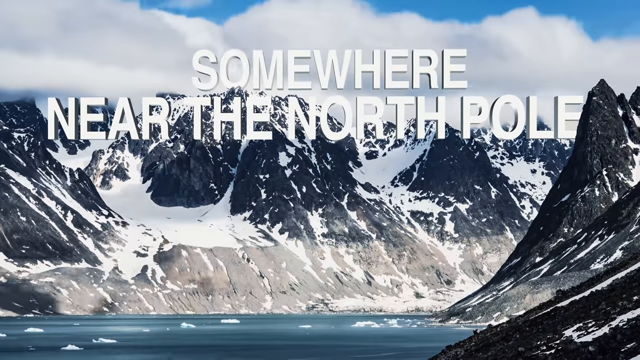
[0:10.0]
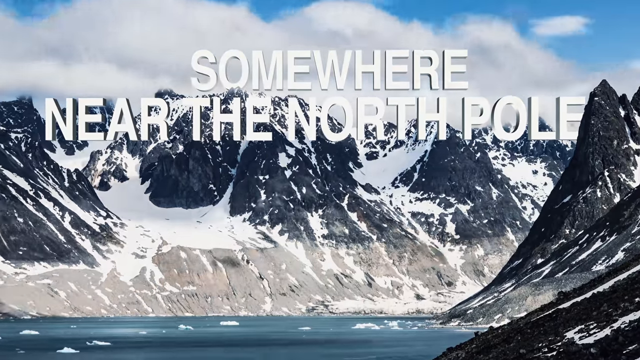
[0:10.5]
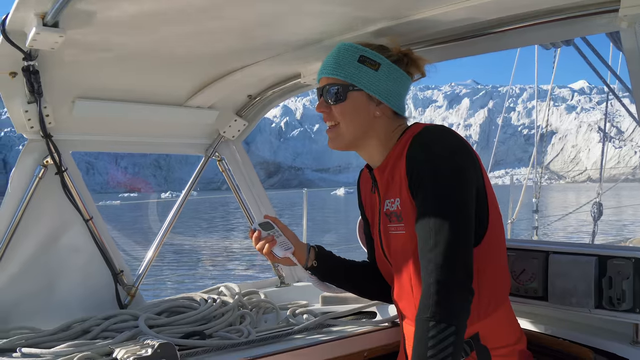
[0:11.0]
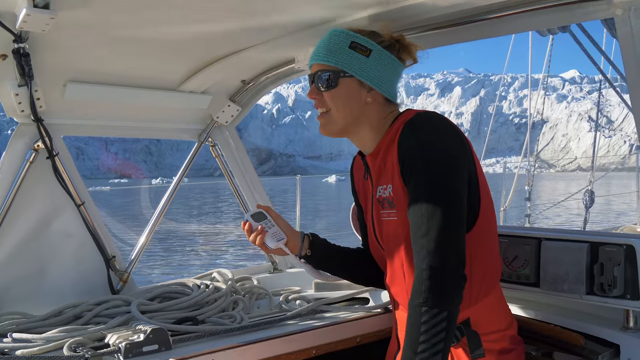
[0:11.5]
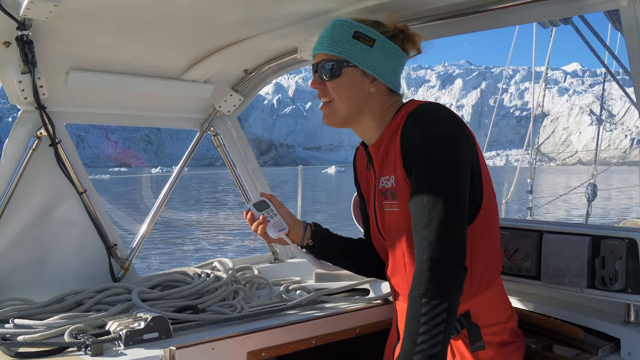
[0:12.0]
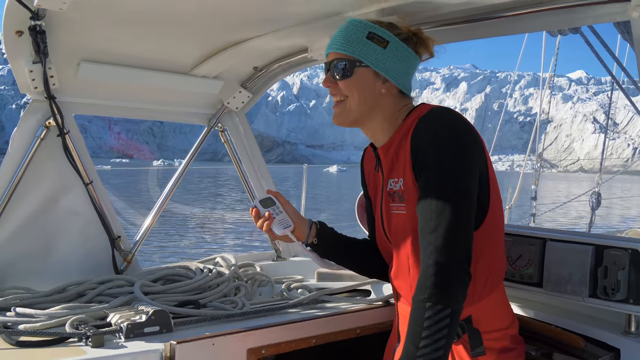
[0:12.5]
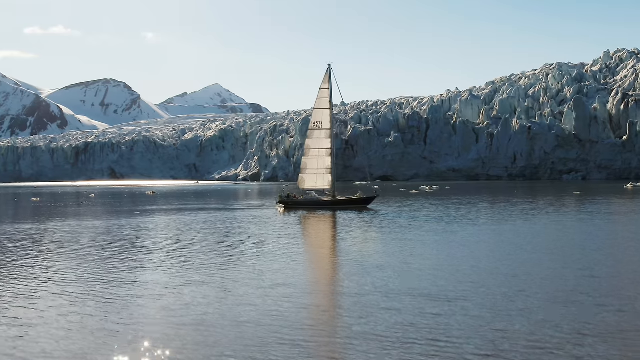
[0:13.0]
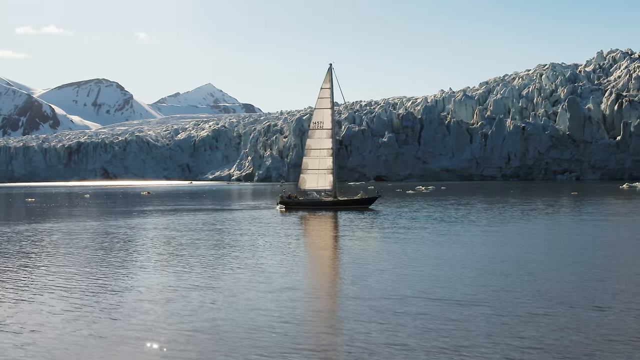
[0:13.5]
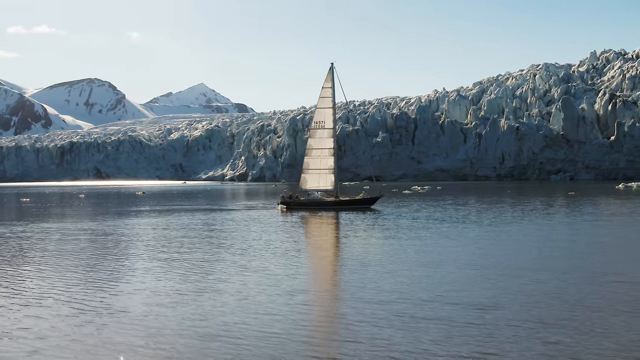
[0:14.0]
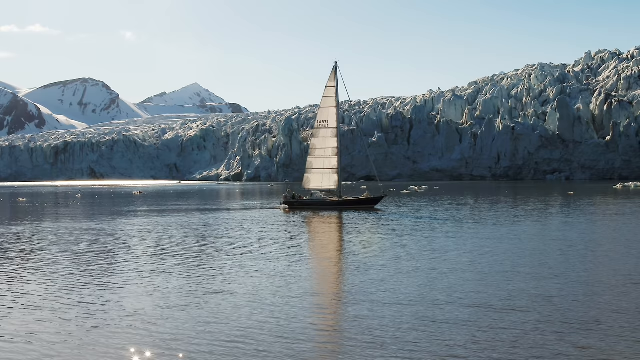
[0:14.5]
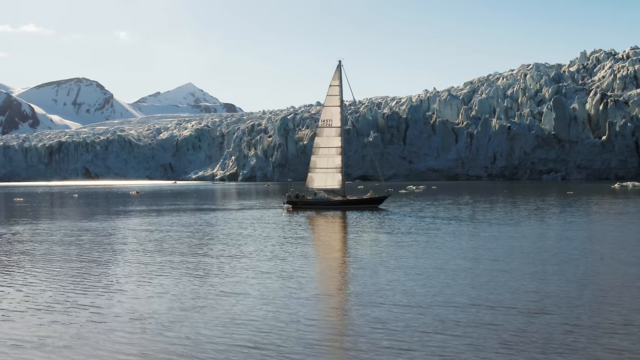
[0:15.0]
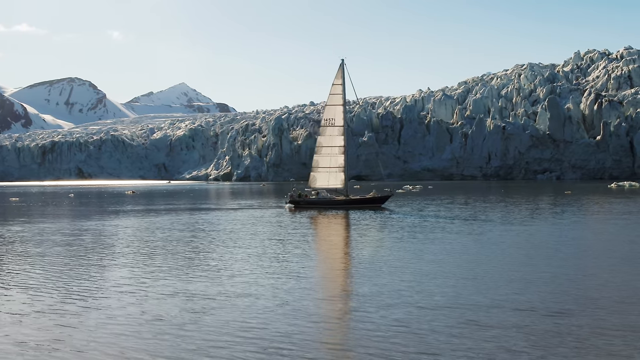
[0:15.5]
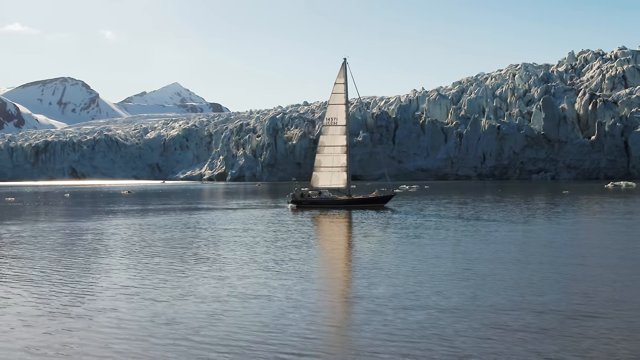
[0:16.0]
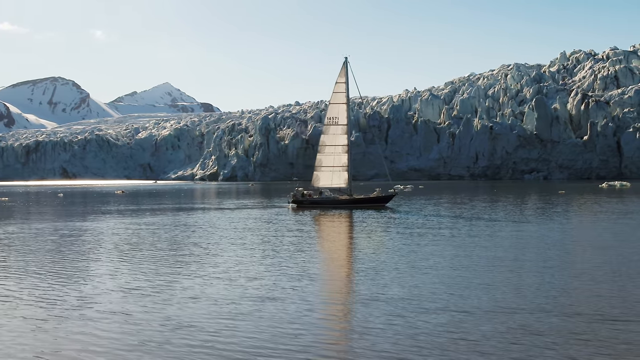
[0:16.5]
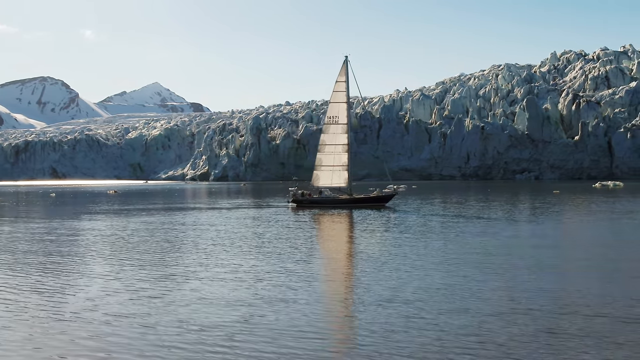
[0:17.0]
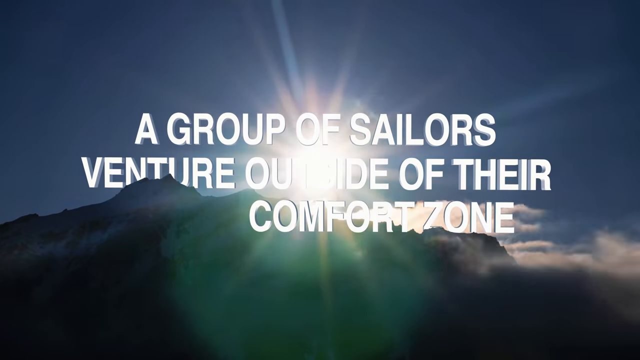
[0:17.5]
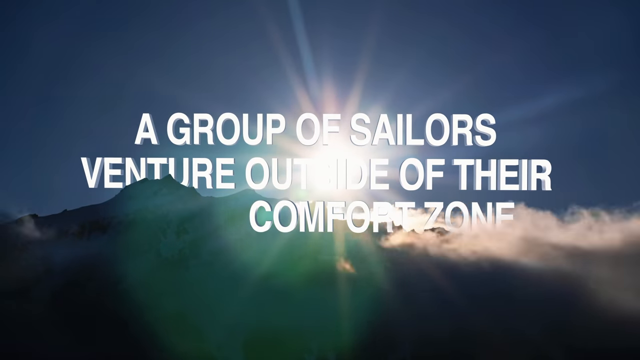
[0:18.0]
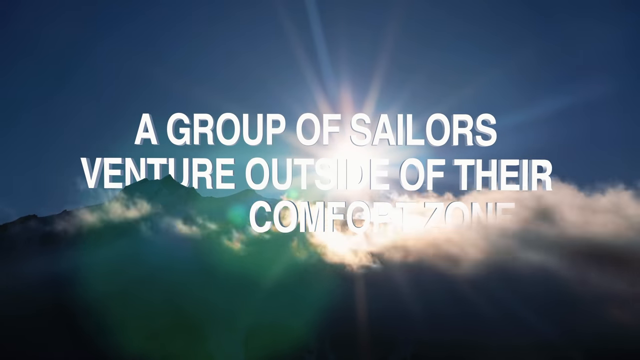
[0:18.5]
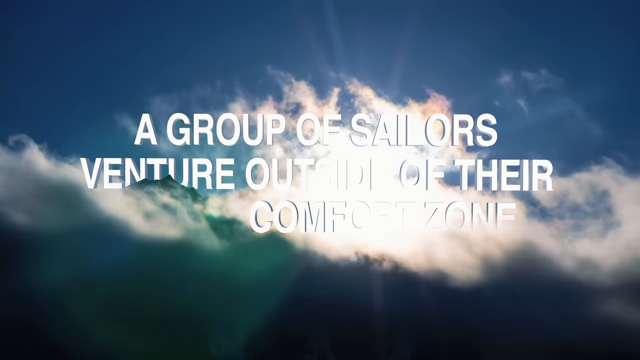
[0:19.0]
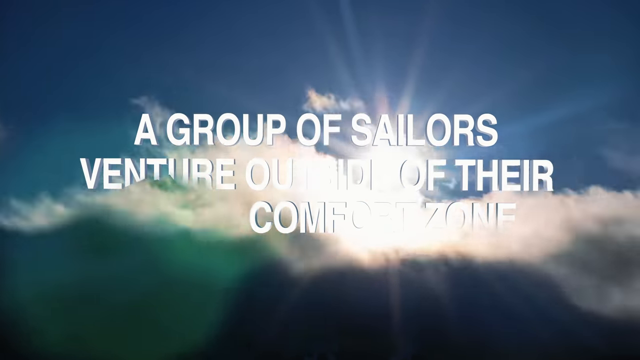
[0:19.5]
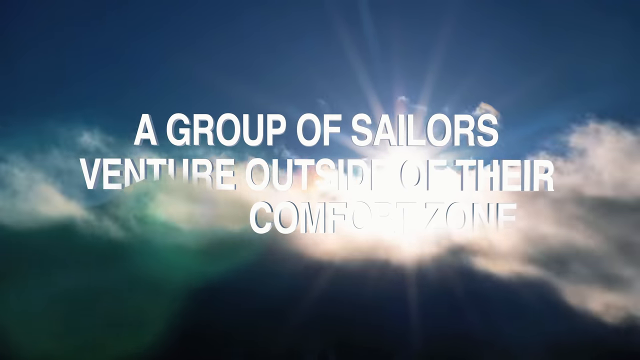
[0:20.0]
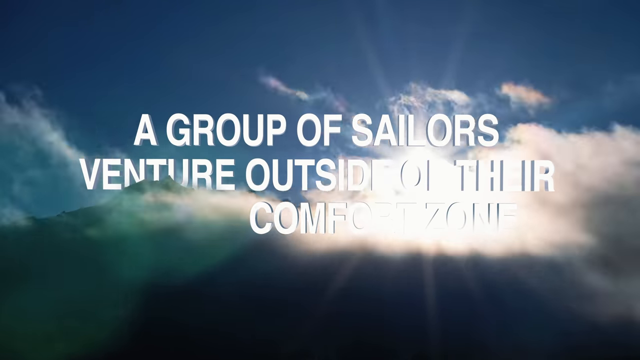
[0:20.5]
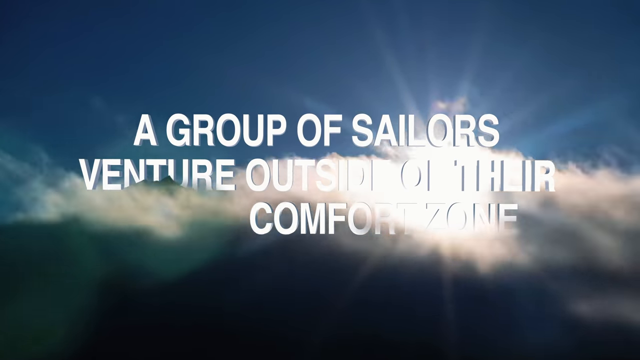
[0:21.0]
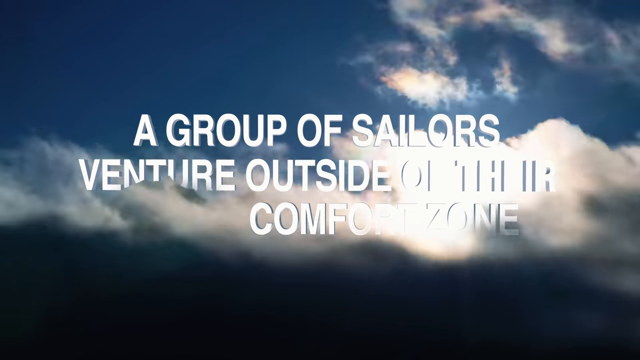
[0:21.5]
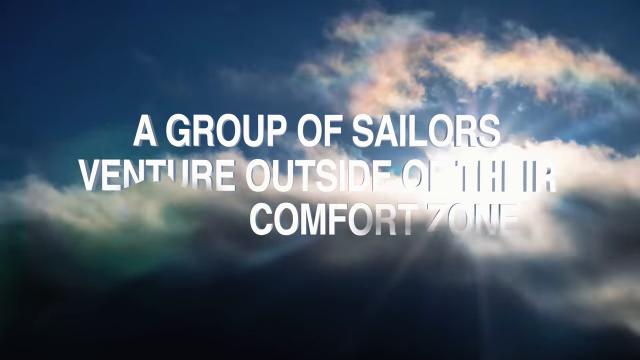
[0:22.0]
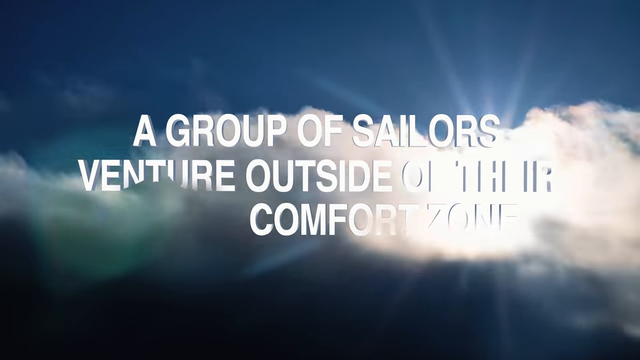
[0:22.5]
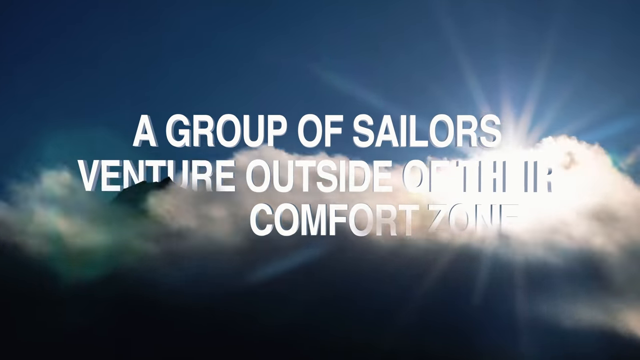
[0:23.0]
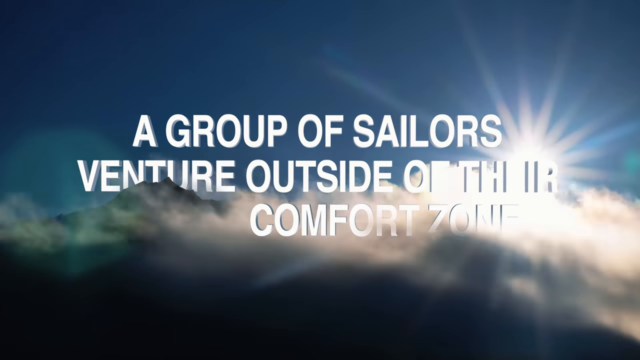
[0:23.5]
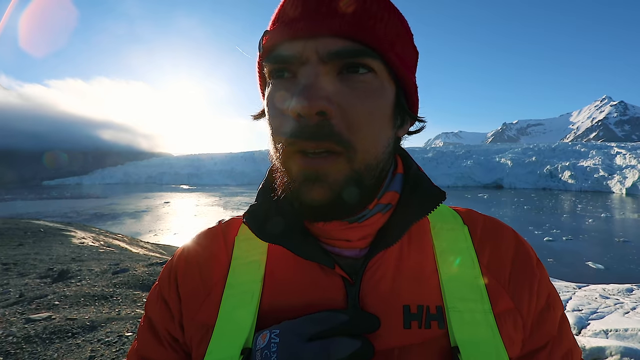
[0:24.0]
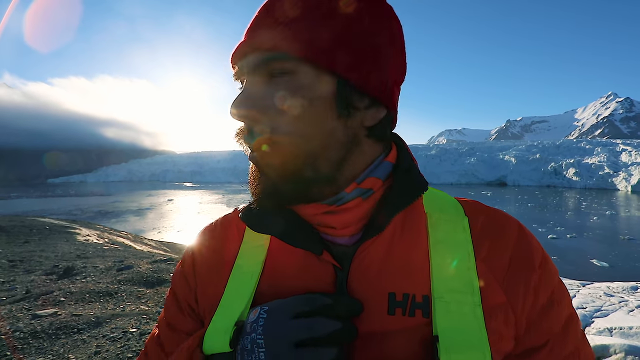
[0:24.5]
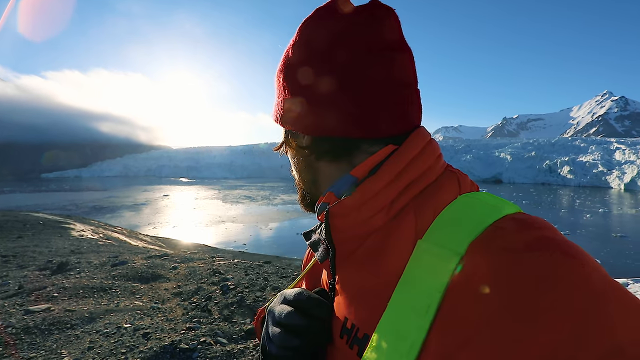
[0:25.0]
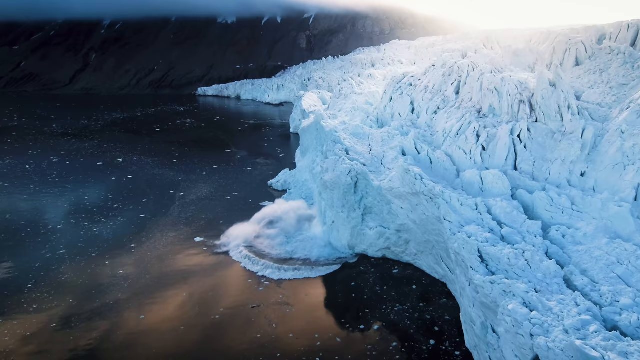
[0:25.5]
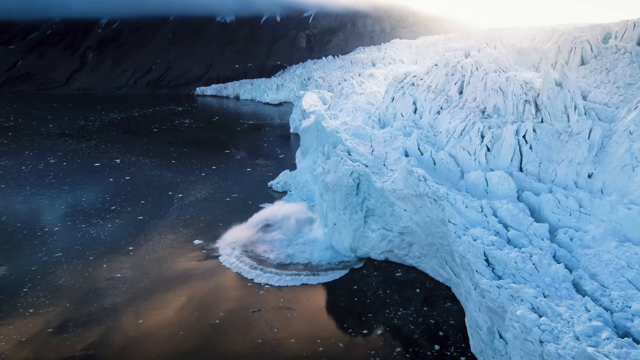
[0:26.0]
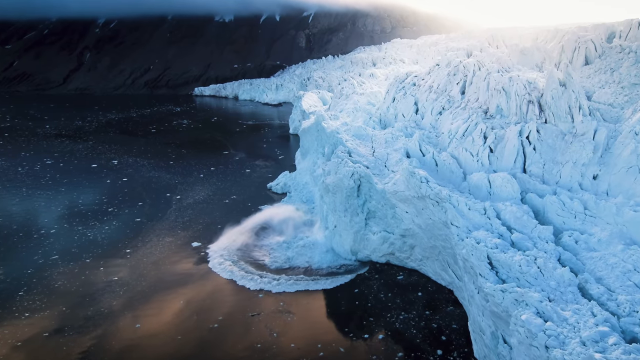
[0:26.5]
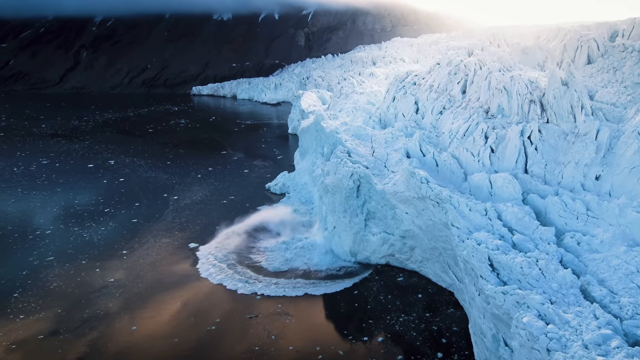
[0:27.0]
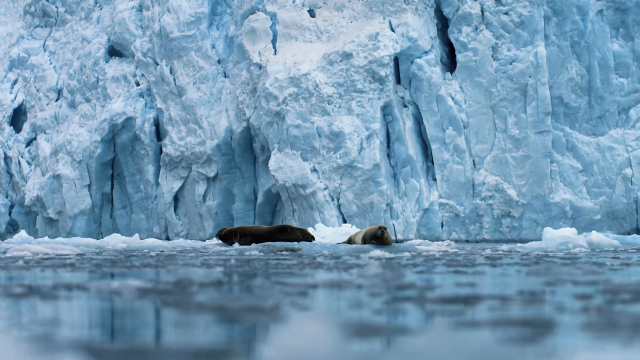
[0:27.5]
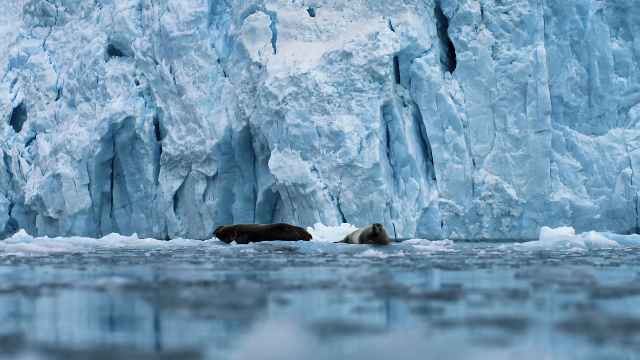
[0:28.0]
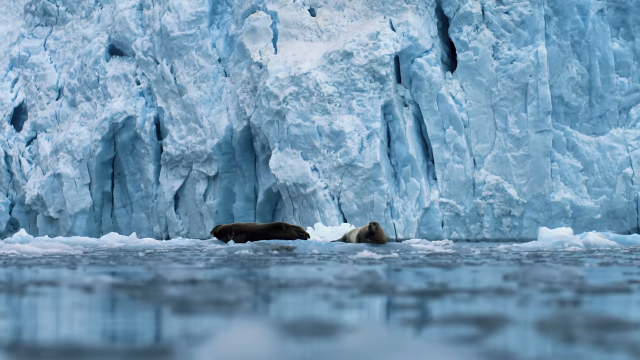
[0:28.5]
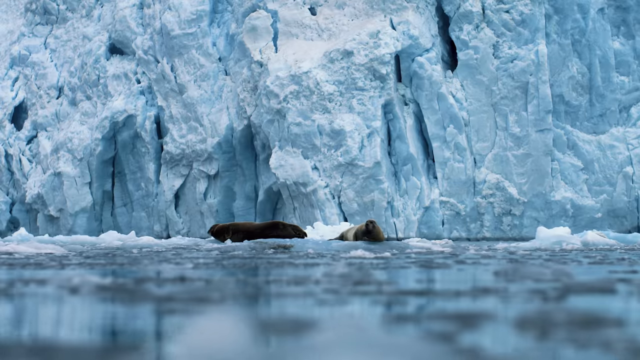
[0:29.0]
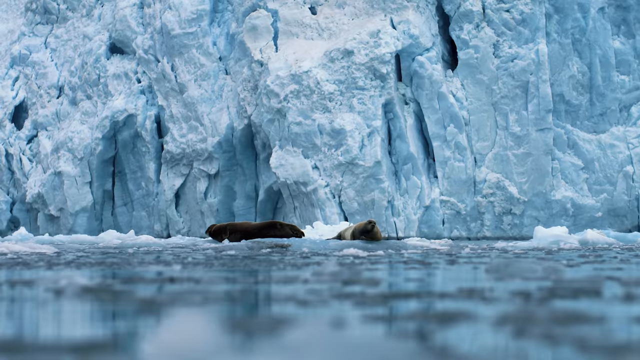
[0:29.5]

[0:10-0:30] The title "somewhere near the North Pole" appears. Clouds and snowy mountains are visible. A girl on a motorboat holds her radio in her hand and smiles as she looks at the sailboat, which goes along with its mainsail up and no jib. The text "a group of sailors venture outside of their comfort zone" appears on screen, placed up in the mountains. Clouds, a mountaintop and the rising sun are shown; clouds go by and the sun starts to set. An avalanche sends snow off a cliff into the water. A guy looks around, and the water disturbed by the falling snow is shown.